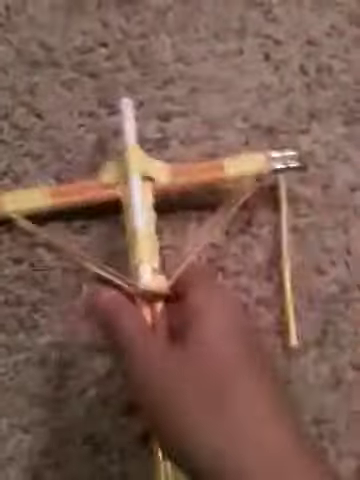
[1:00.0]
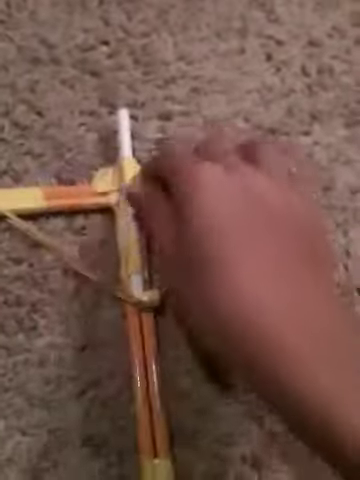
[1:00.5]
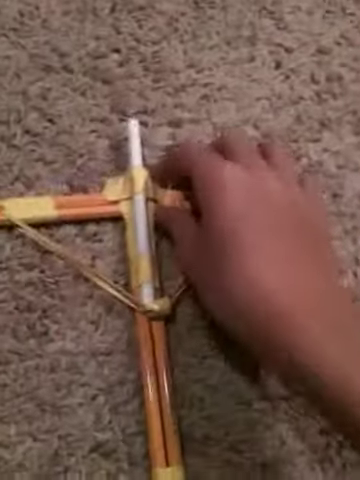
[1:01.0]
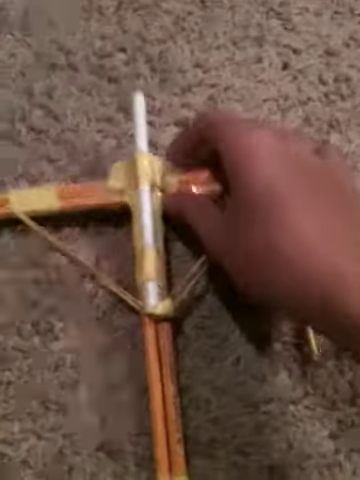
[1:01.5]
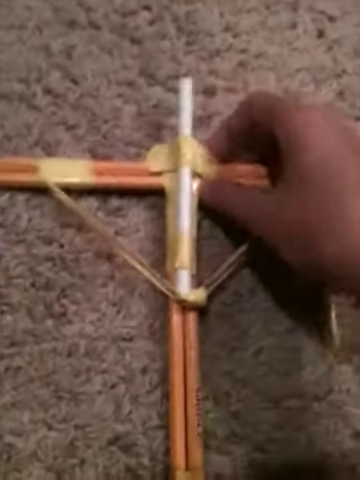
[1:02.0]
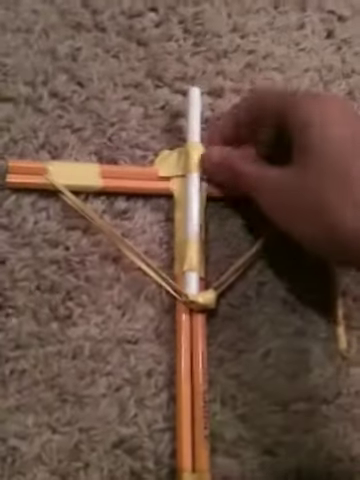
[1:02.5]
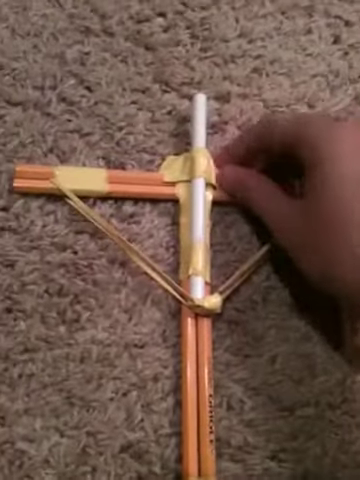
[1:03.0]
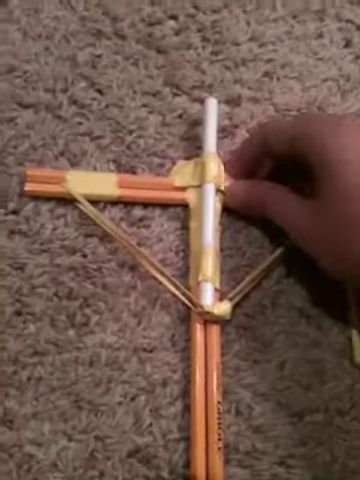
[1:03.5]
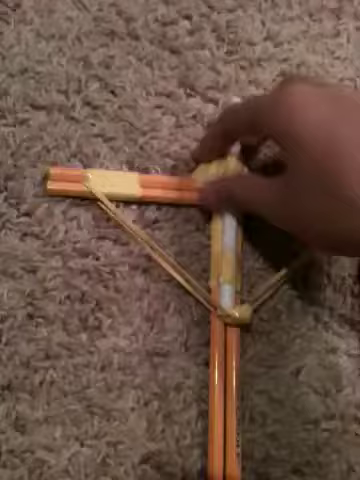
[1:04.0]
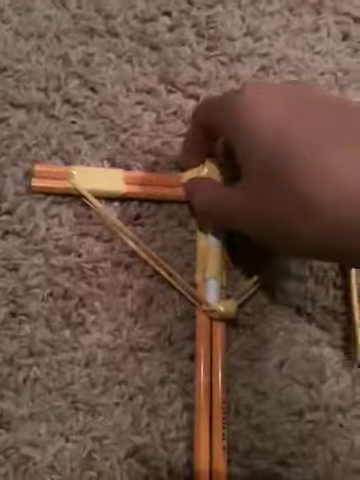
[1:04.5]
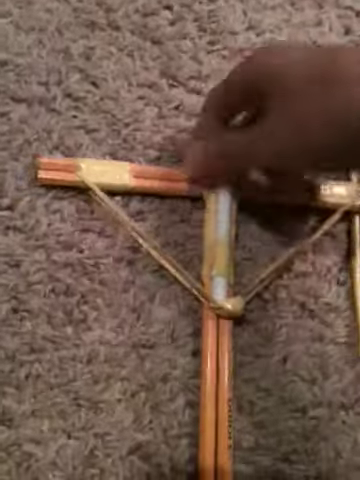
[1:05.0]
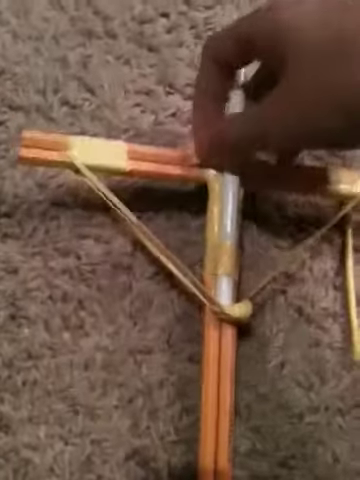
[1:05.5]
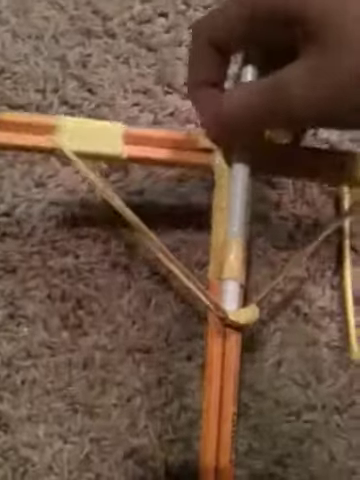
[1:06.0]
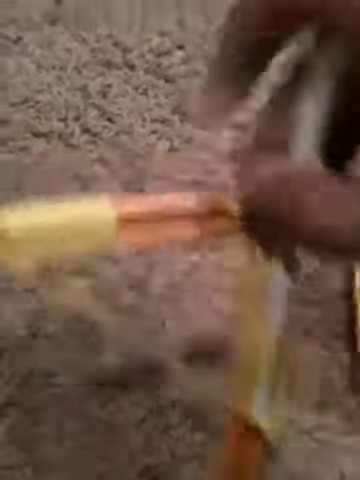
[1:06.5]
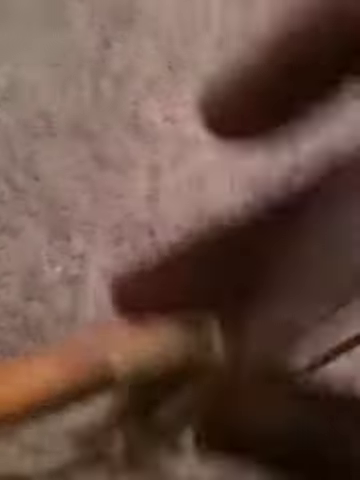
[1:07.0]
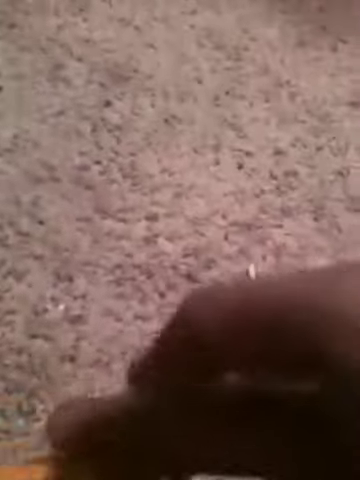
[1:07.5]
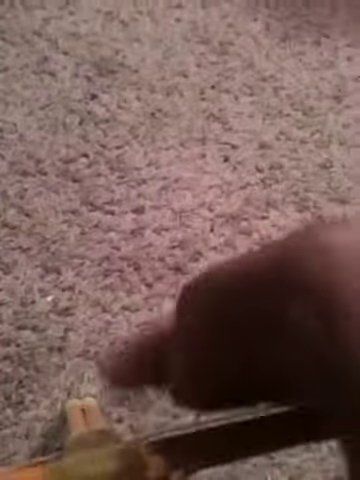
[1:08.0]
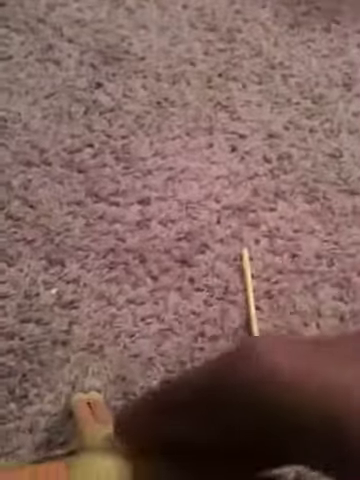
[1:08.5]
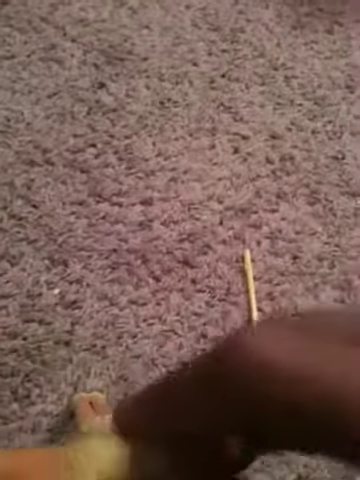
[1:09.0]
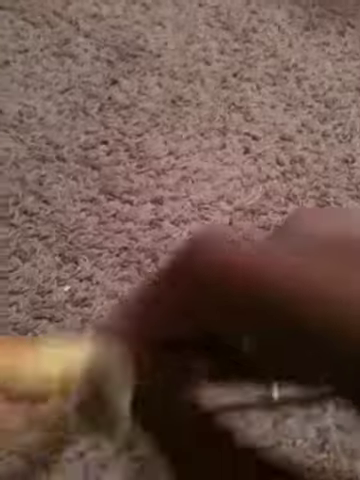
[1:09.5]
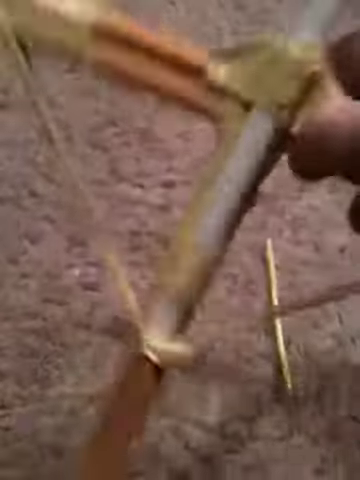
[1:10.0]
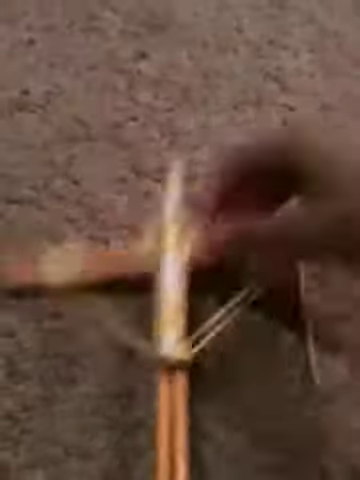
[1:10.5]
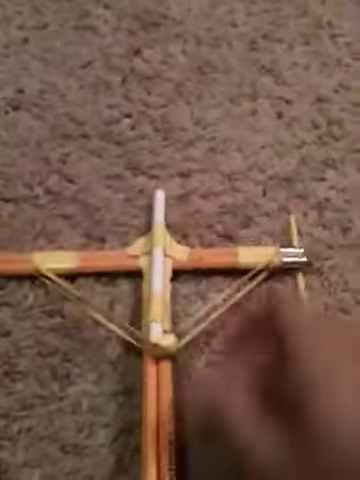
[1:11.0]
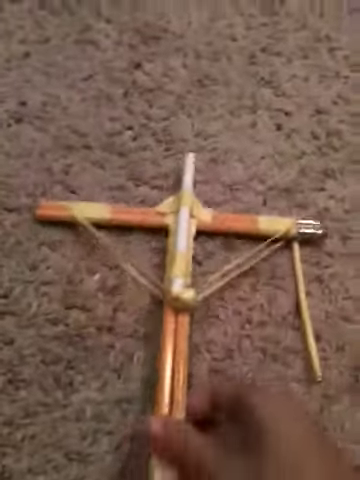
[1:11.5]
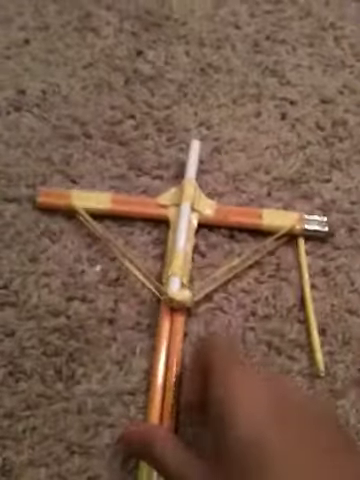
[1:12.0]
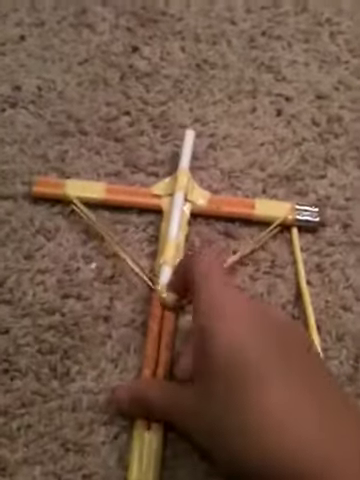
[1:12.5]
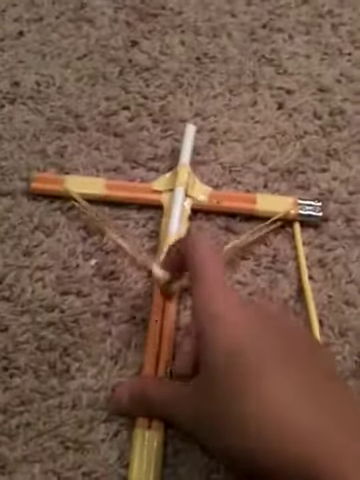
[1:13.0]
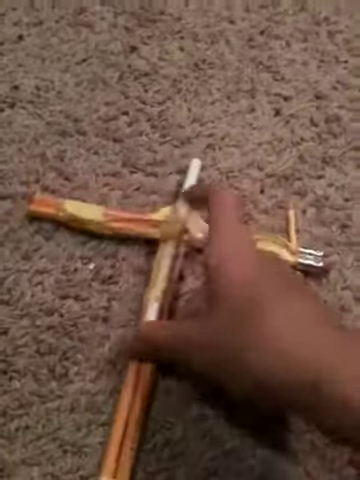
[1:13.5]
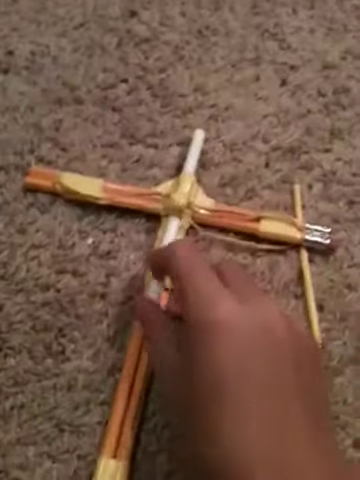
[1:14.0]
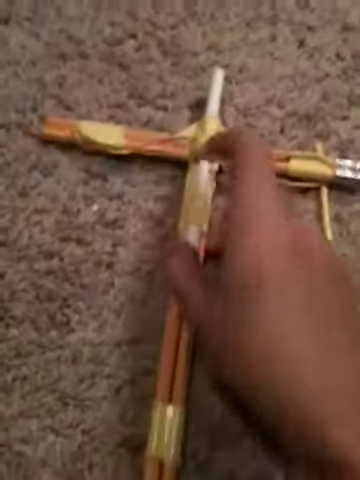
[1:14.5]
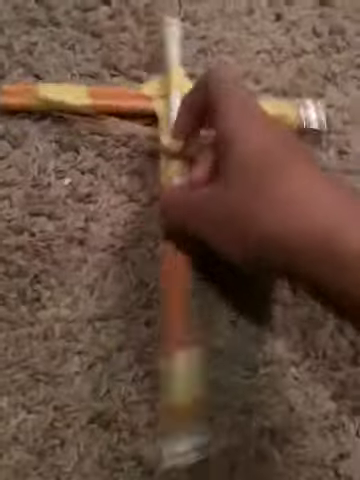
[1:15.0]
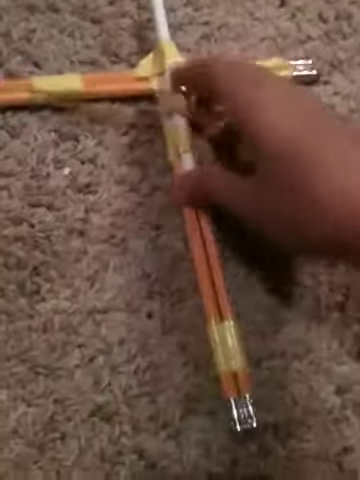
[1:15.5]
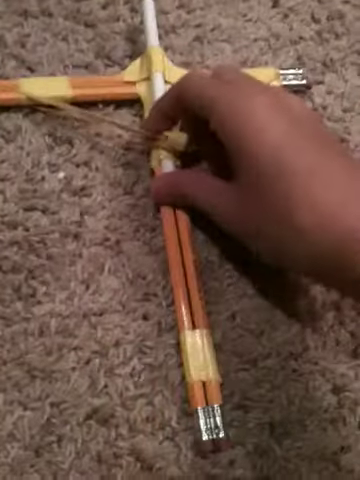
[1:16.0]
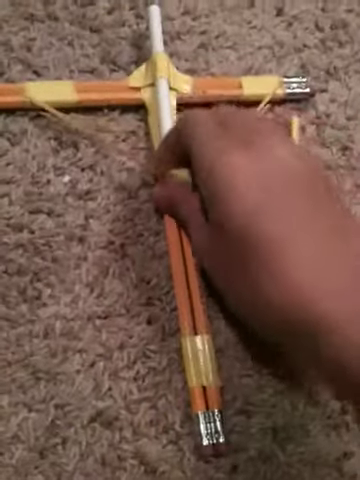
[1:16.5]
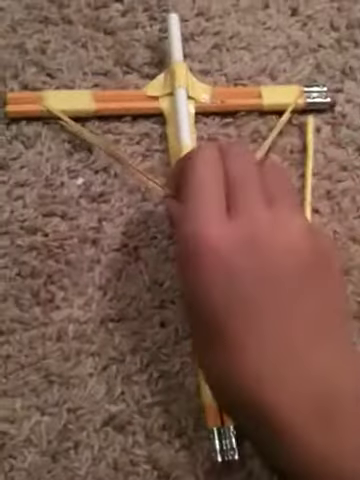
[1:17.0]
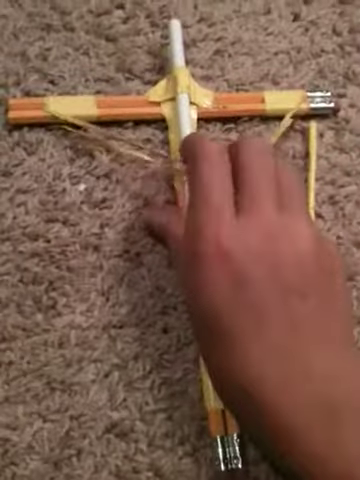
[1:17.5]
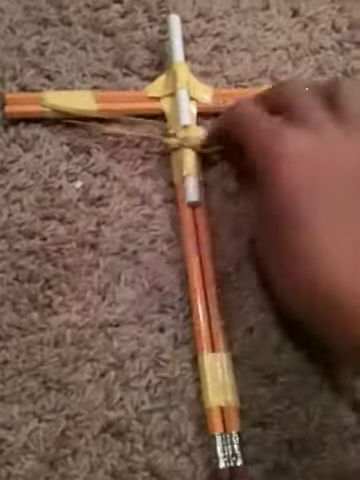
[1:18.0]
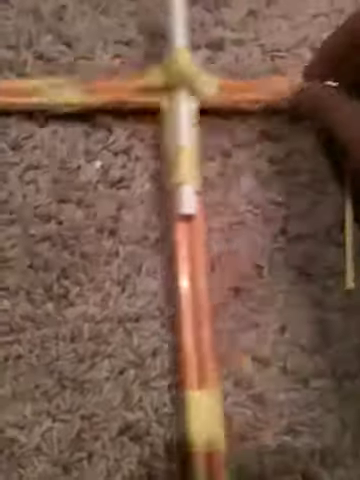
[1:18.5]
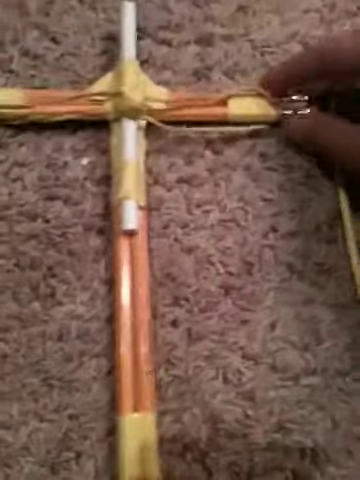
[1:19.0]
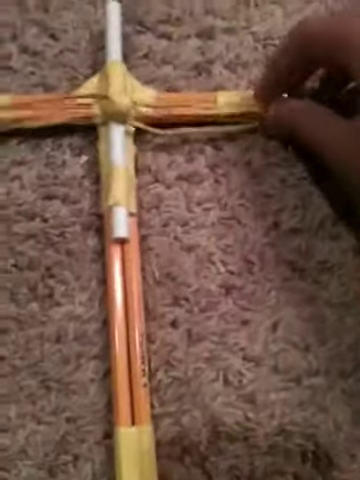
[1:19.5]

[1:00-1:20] The user's right hand touches the top portion of the crossbow device, pinching components at the intersection of the tape. The user pulls the crossbow up to the top of the camera view to show the details on its top. With the forefinger and middle finger, the user pulls back the elastic band, using the thumb as support on the shaft of the crossbow, showing the loading area where the crossbow bolt would enter the loading port. The user highlights how the elastic attaches to the yellow tape, forming the attachment points on the crossbow, and indicates where the bolt would enter the loading port.